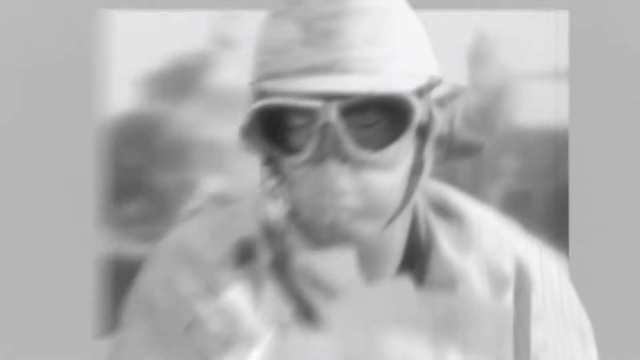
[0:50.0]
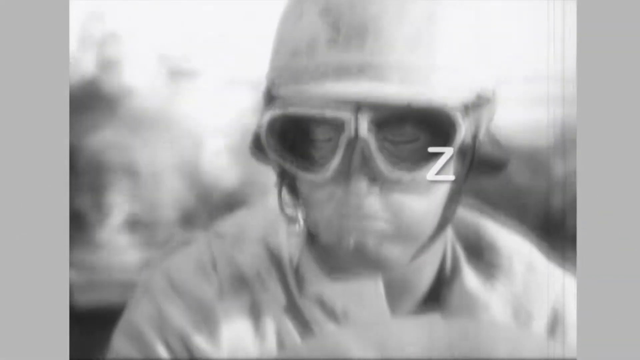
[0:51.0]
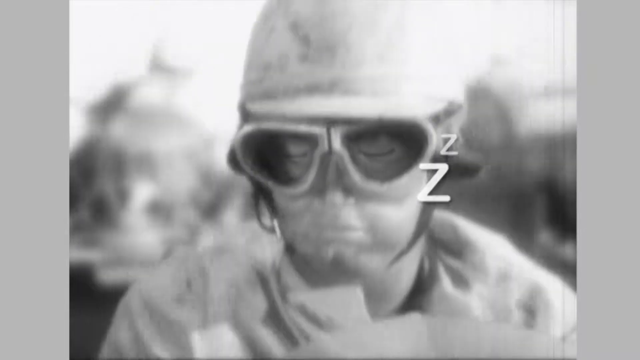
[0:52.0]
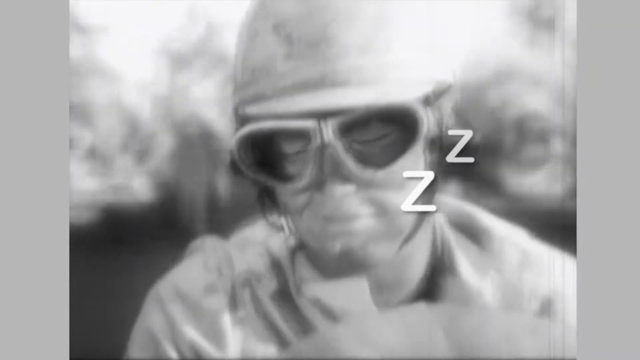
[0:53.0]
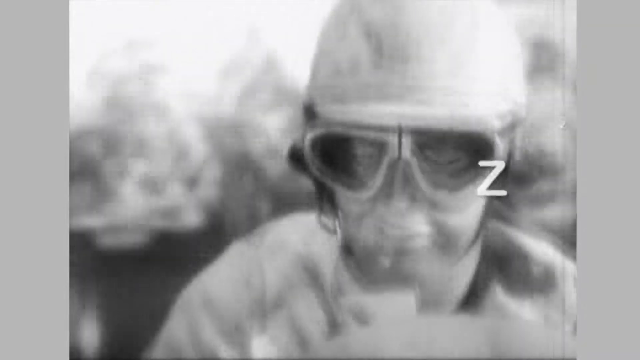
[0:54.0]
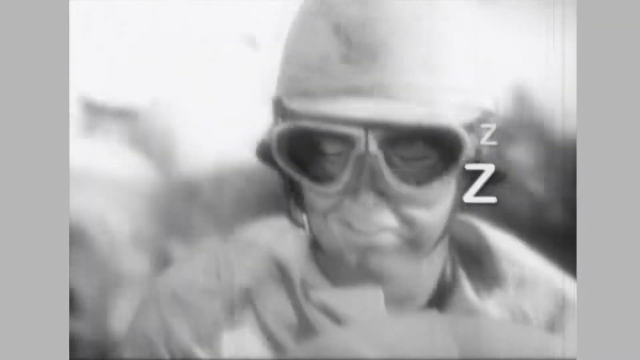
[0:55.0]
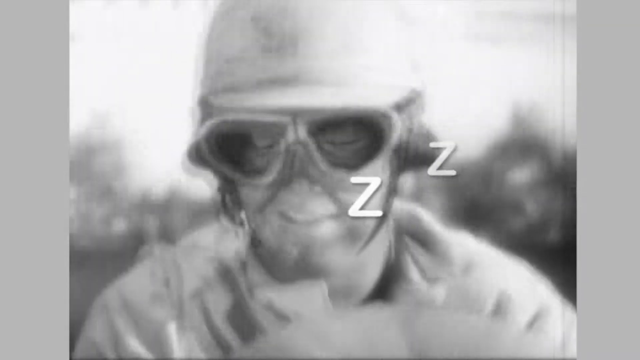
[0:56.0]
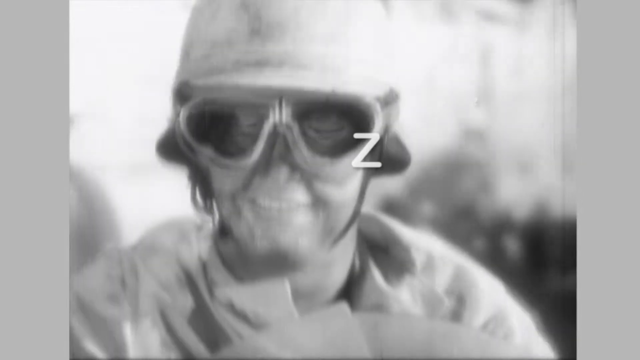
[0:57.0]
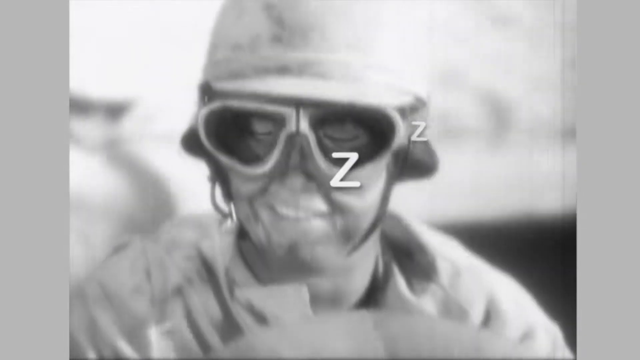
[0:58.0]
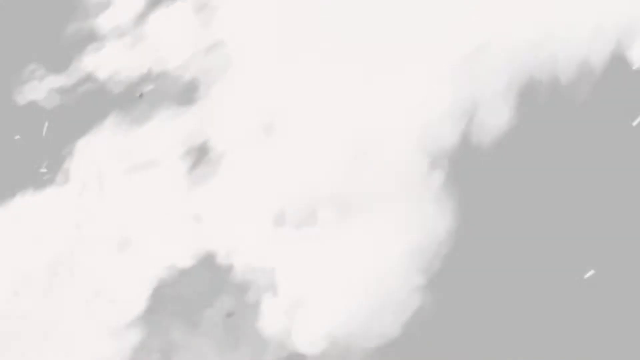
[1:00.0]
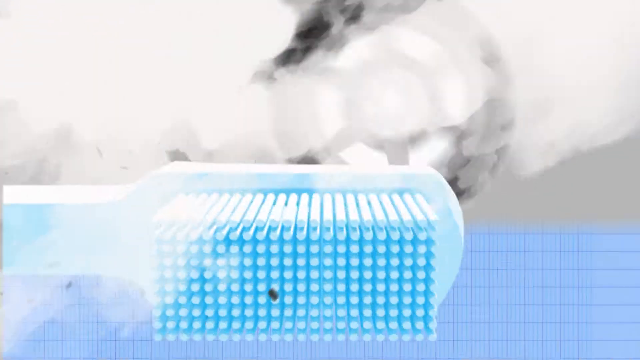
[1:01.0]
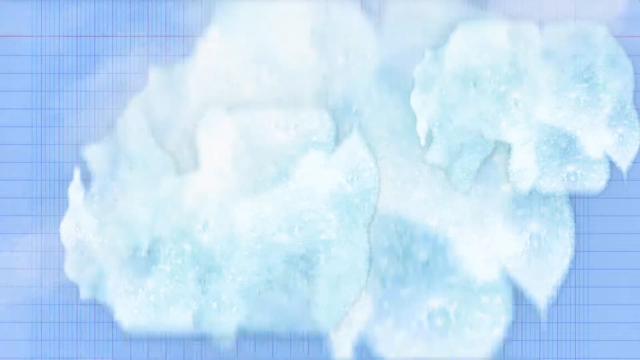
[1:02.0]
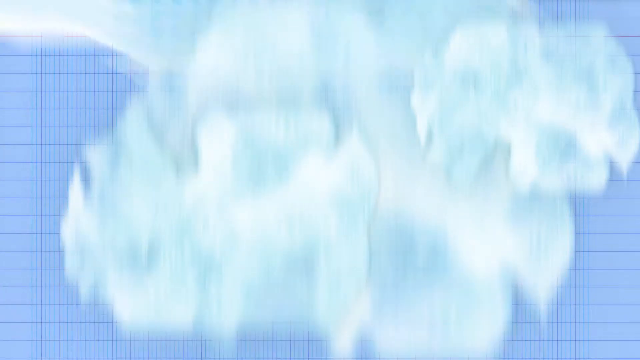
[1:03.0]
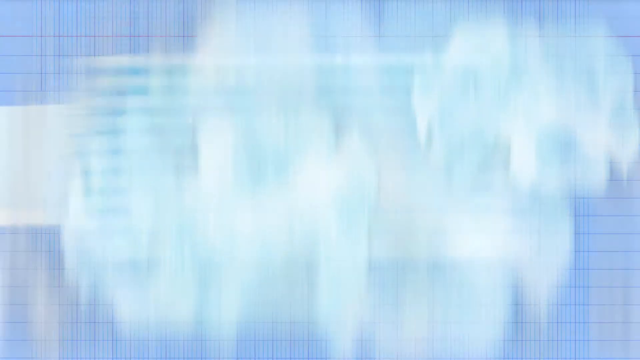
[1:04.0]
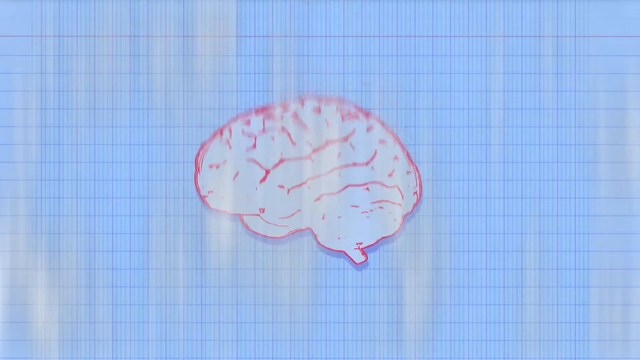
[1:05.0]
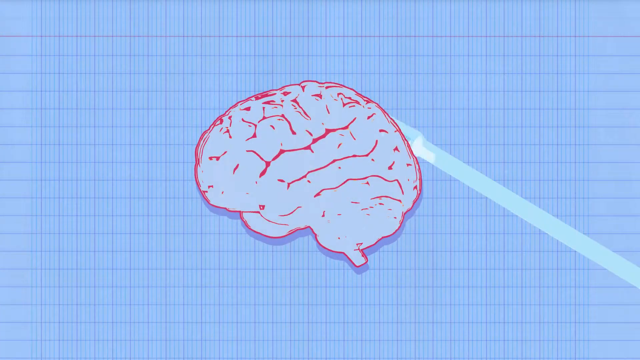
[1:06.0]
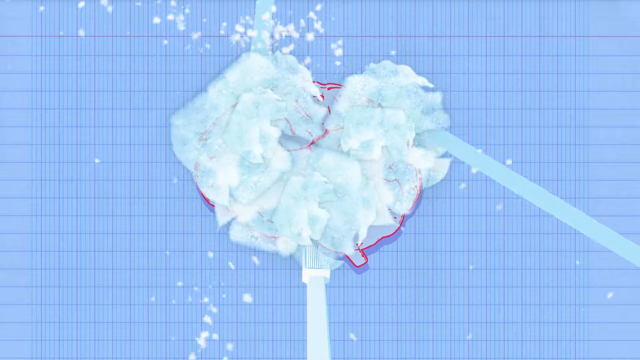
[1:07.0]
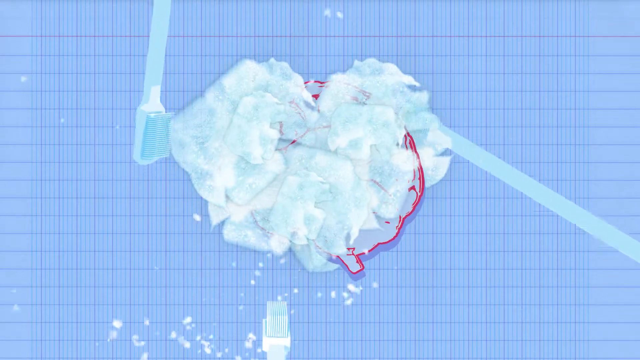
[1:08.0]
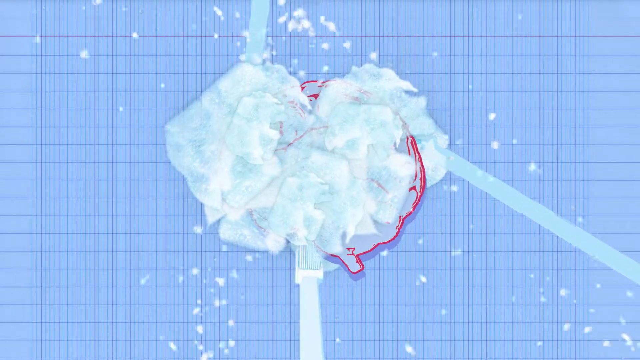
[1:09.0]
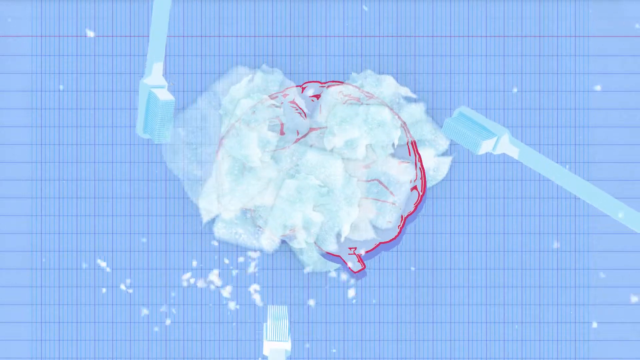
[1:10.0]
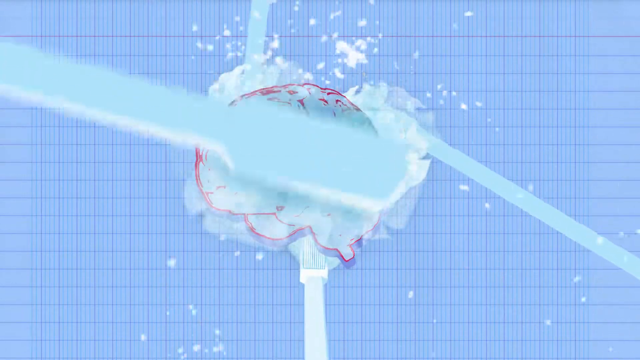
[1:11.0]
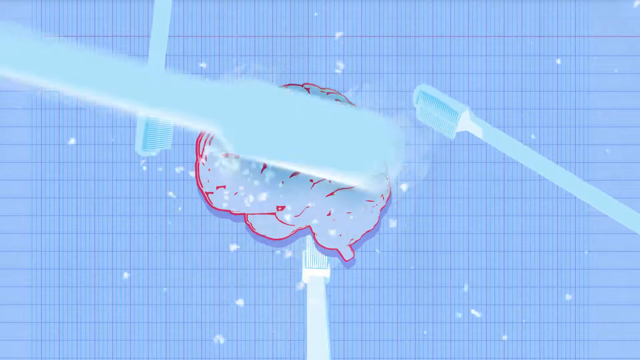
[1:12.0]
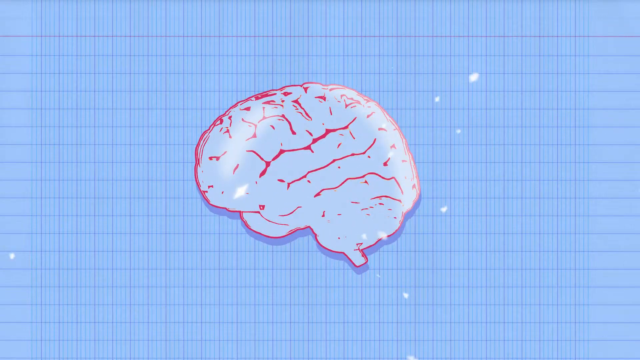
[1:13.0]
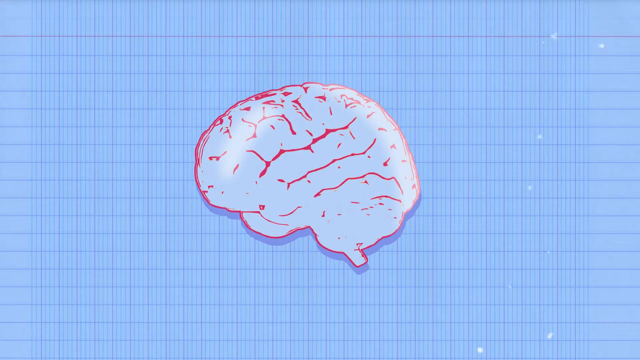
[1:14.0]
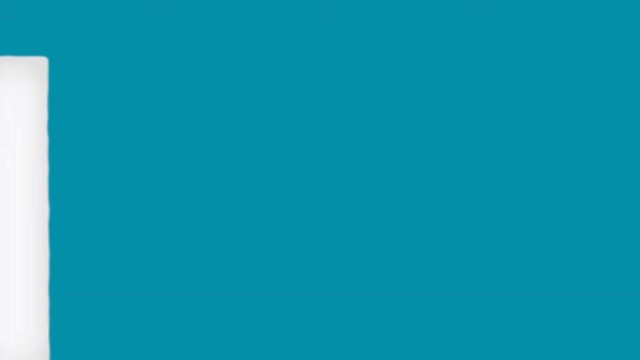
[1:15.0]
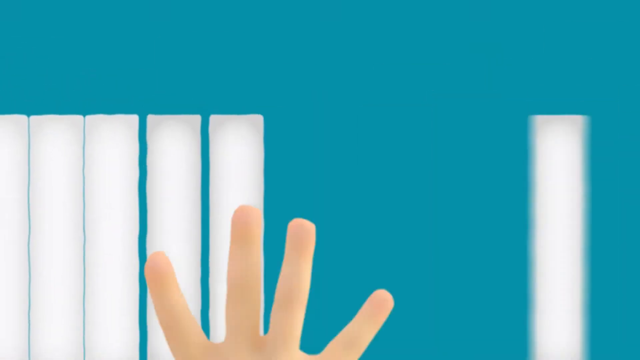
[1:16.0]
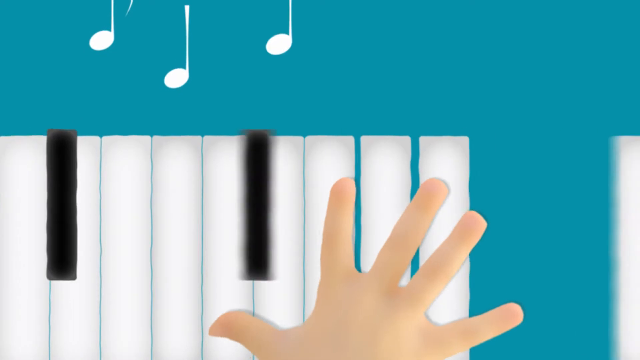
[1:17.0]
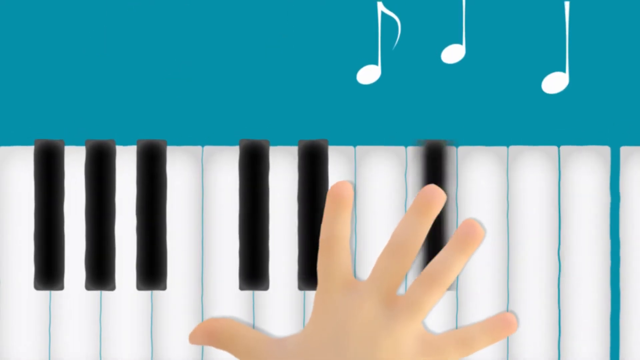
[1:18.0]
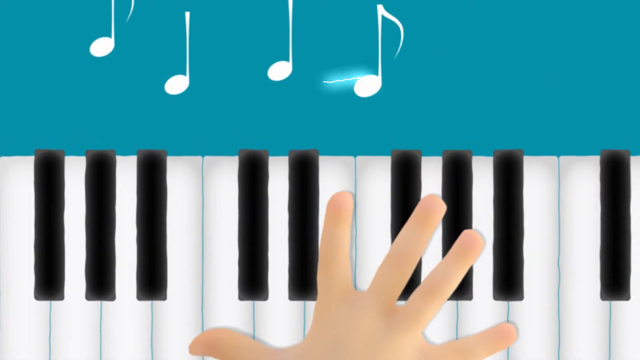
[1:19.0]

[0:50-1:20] There seems to be a war hero falling asleep. Then a toothbrush scrubs the screen: toothbrushes rub on a brain with soap, making the brain look shiny again. Then there is some music, so both someone at war and someone in music are shown.